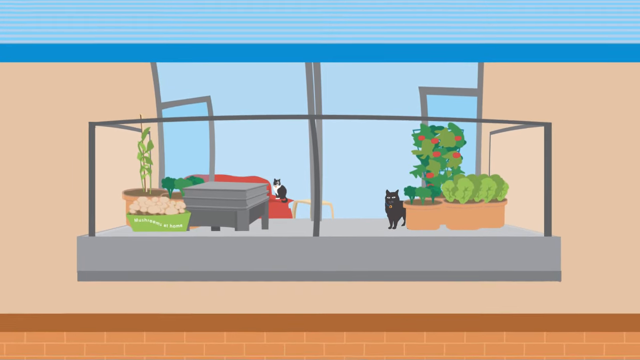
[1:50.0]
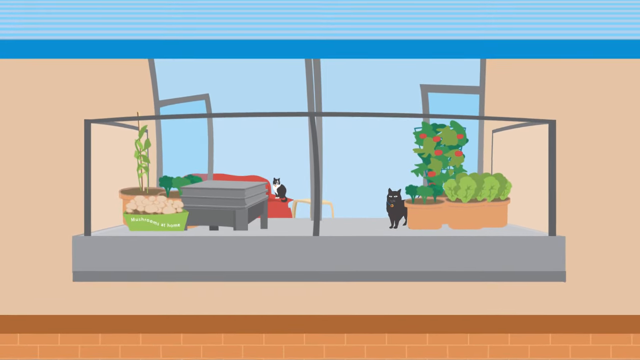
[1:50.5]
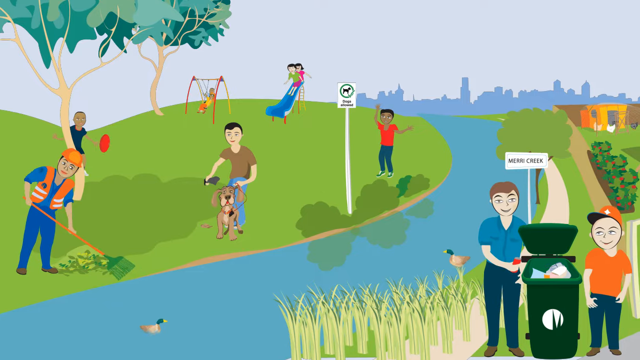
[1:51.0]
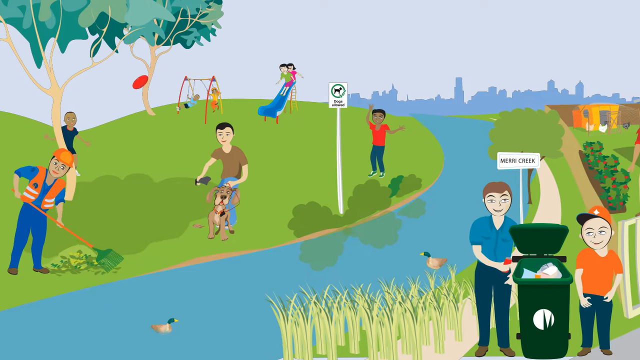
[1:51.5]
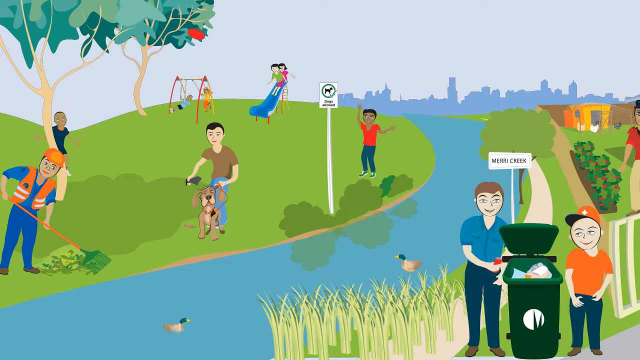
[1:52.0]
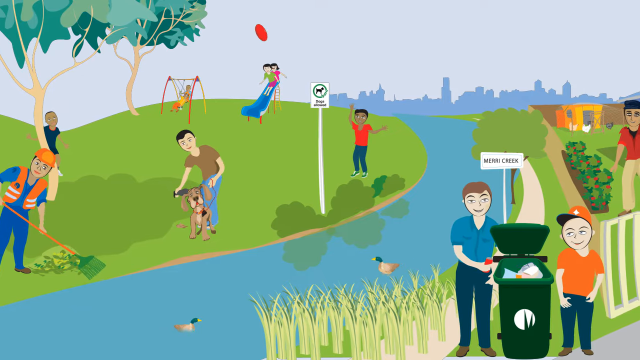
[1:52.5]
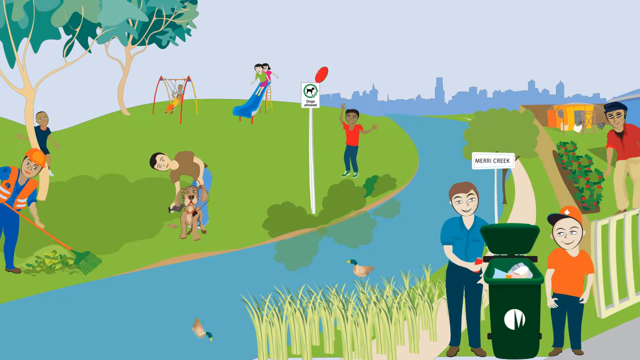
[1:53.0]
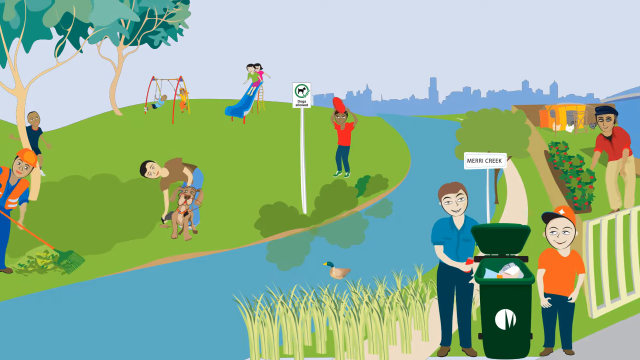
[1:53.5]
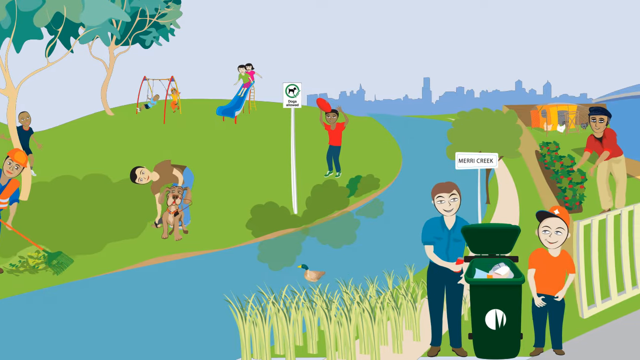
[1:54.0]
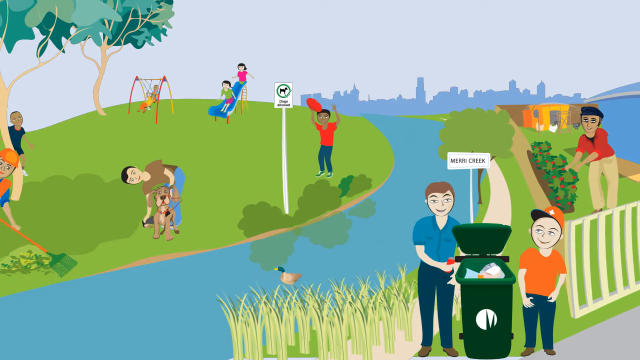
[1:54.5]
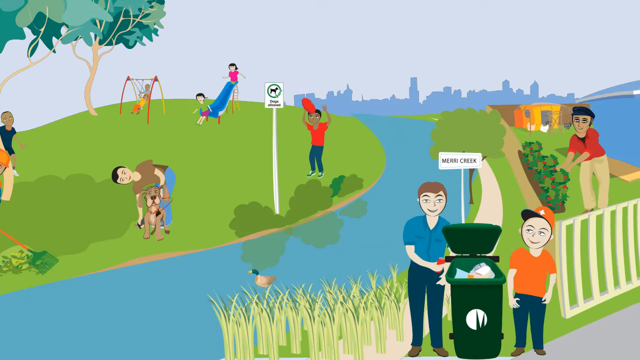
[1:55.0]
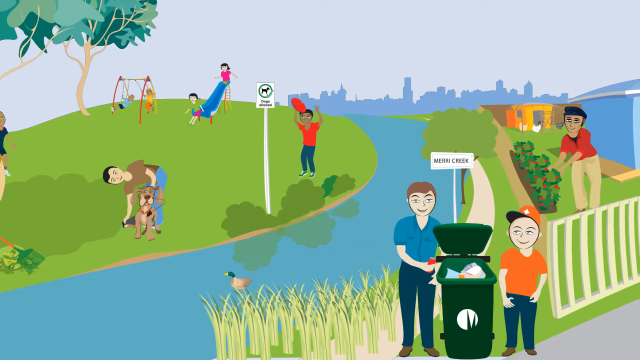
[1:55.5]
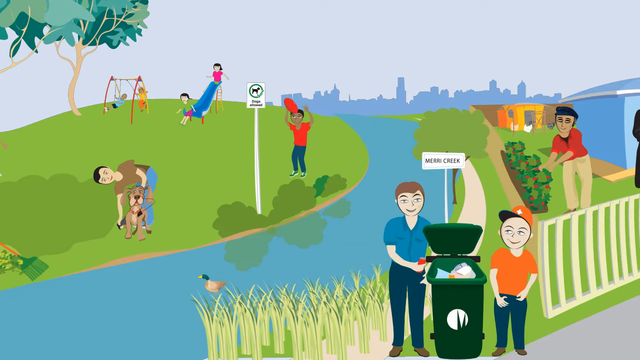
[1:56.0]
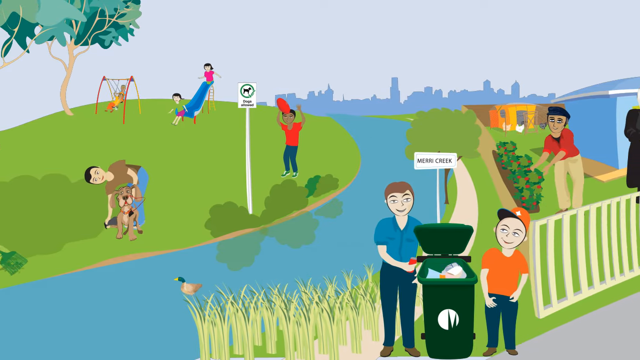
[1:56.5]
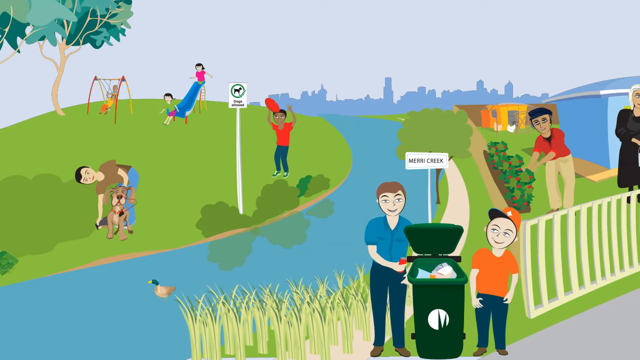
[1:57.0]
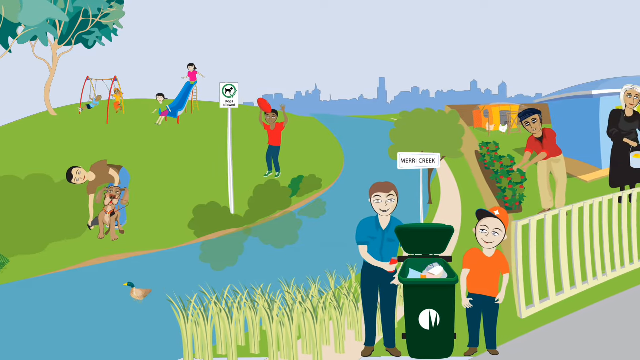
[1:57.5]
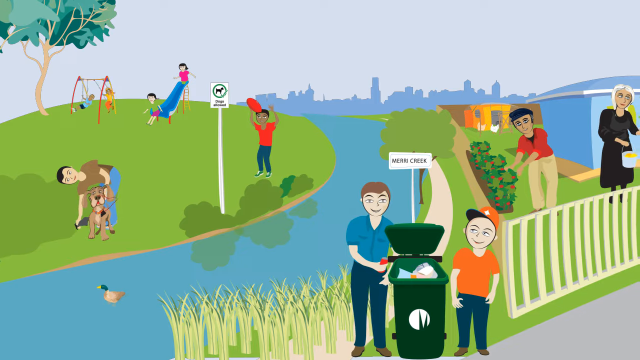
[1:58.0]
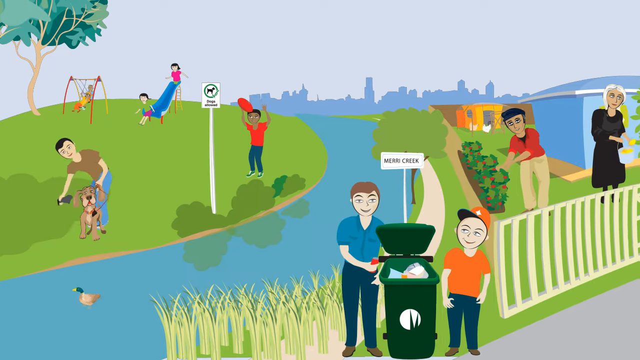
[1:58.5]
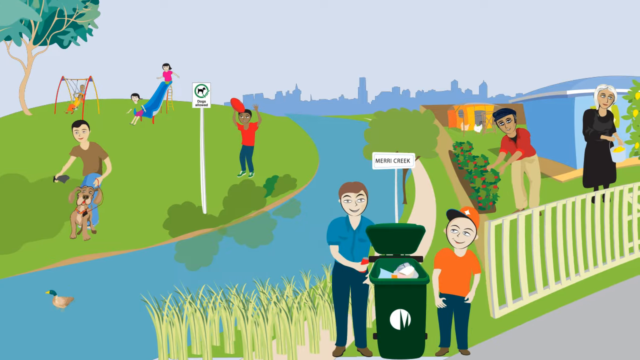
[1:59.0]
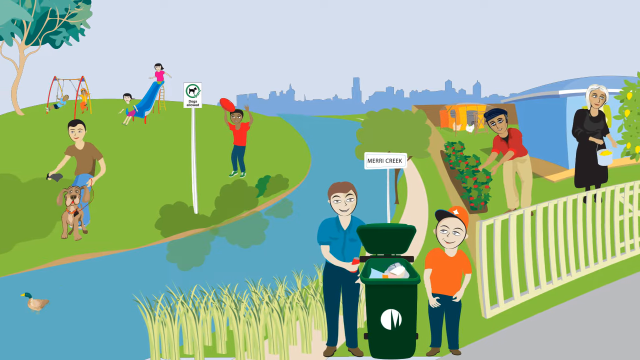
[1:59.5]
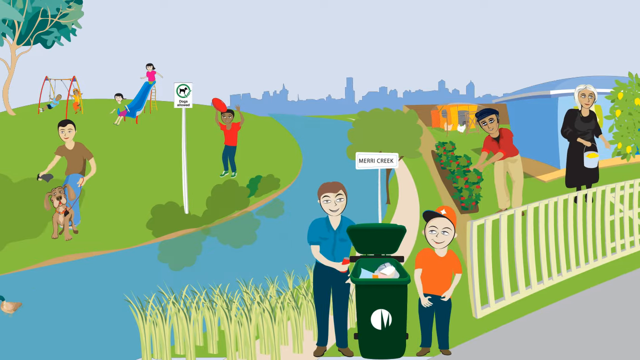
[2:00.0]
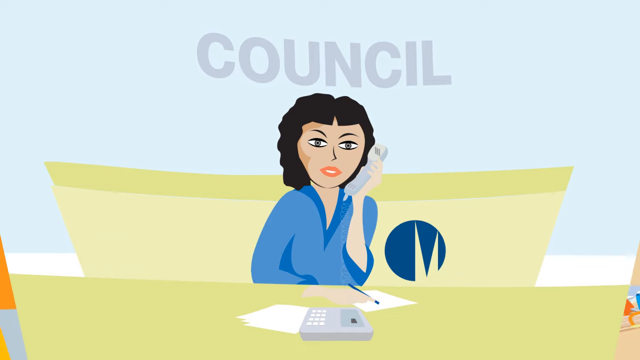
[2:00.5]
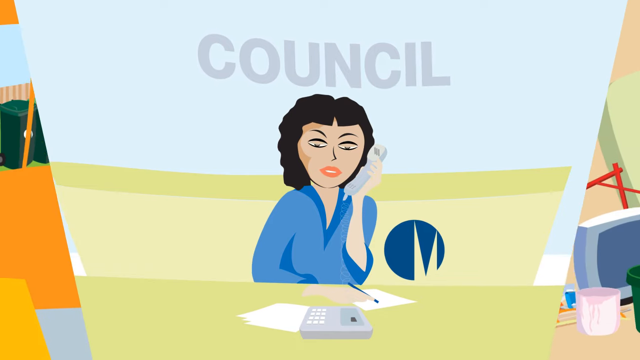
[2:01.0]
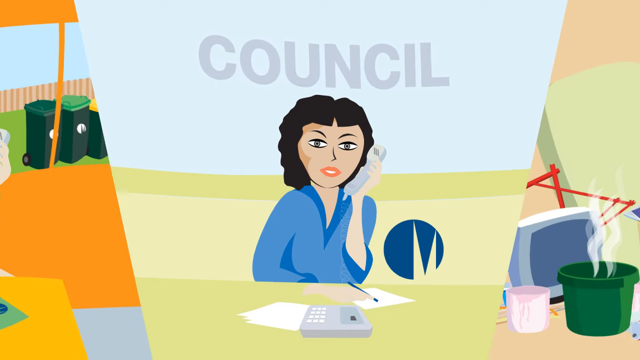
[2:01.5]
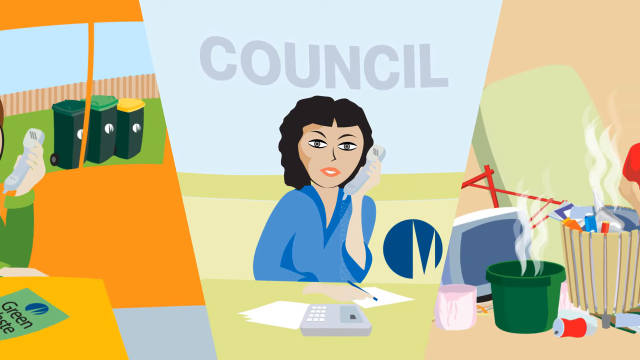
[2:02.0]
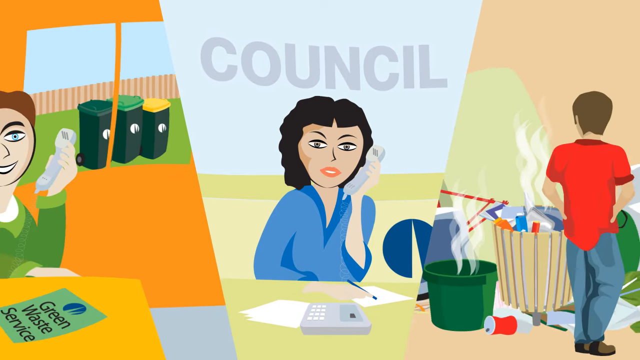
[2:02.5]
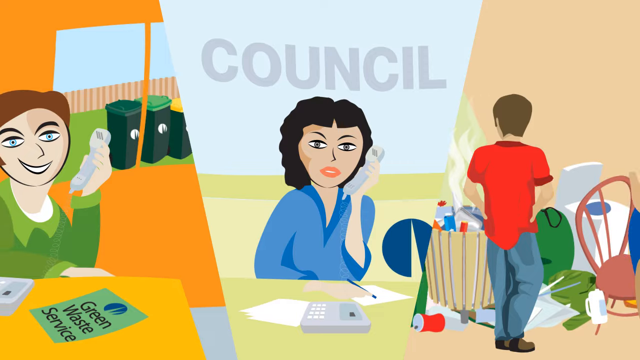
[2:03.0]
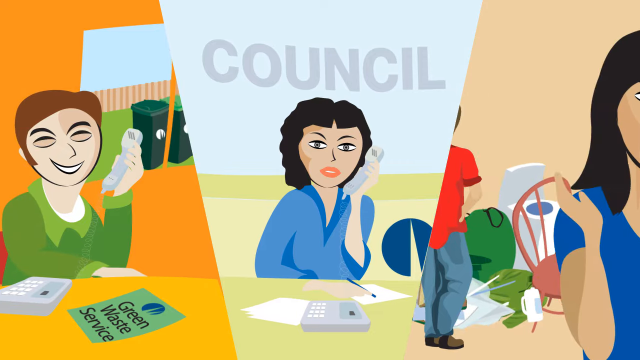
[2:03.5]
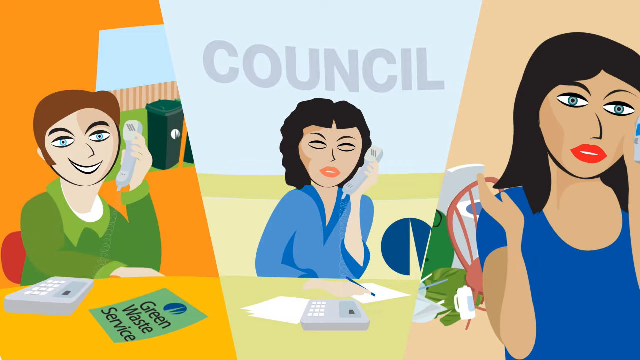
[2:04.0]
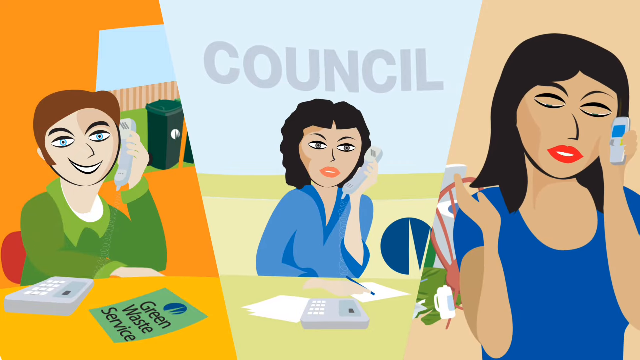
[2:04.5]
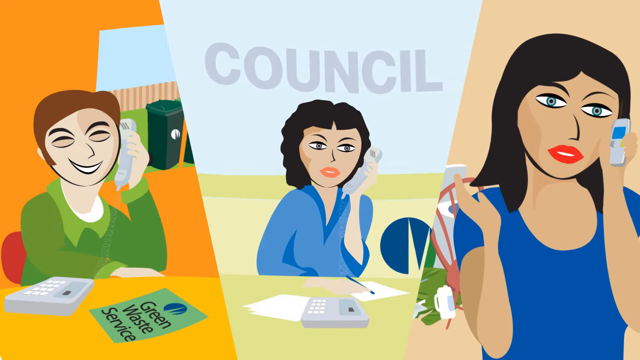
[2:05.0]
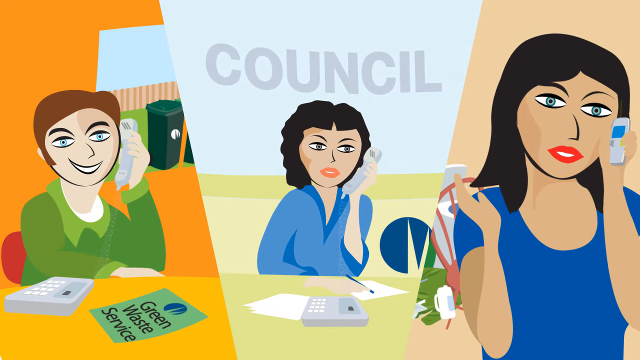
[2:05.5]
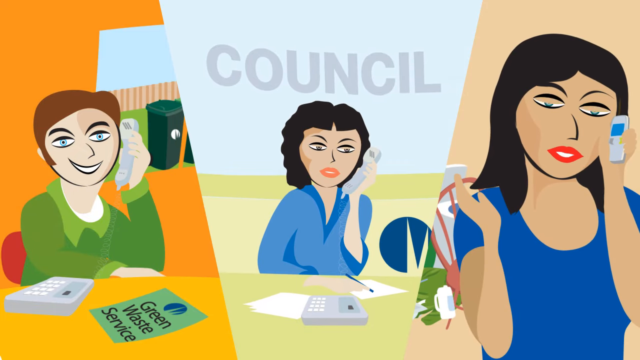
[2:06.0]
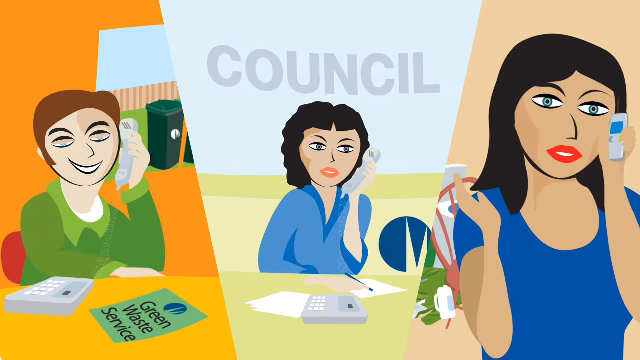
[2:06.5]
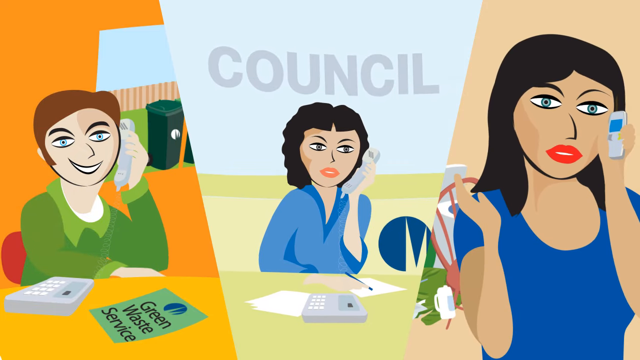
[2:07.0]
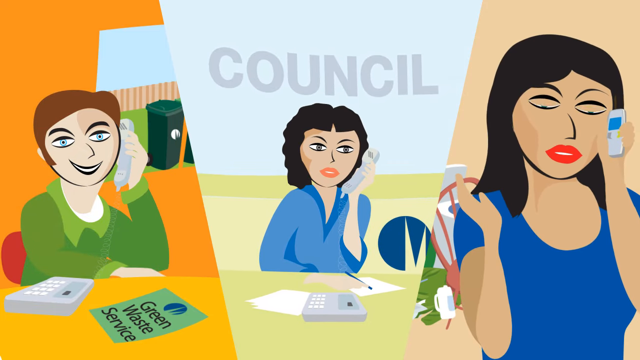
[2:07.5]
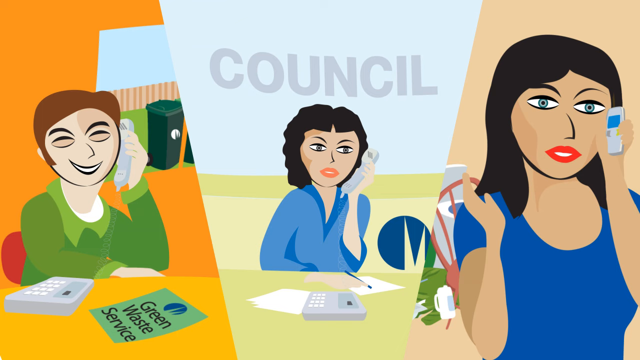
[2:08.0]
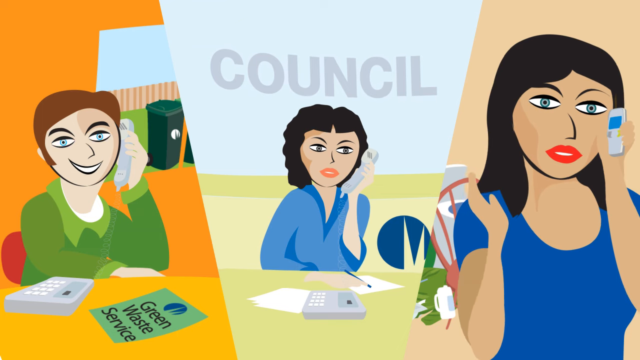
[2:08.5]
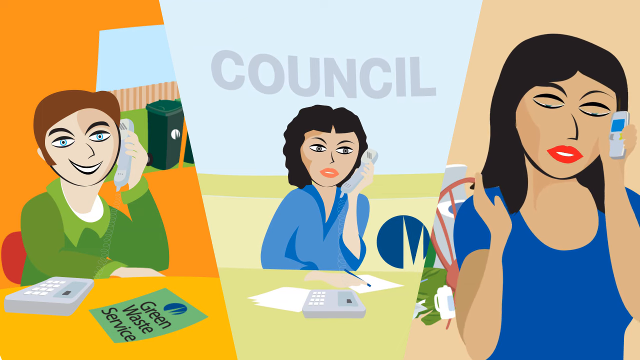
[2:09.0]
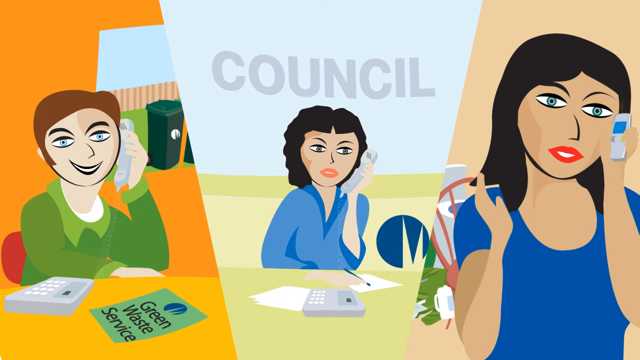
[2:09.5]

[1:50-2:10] The side of a house or apartment complex appears, with a balcony holding plants outside and outdoor furniture. Inside are a couple of cats, one all black and one black and white; the black and white cat is sitting on the edge of an orange couch. The view zooms out to show many people at a park: some doing cleanup, a person with a dog, a couple of people disposing of waste, another person gardening, and a kid playing with a frisbee. In the background are kids on a swing and kids on a slide, and far in the back is a city skyline. The view kind of moves to the right, showing more people working together on recycling. People are making calls, and a person in the center who works for the city council is answering them.